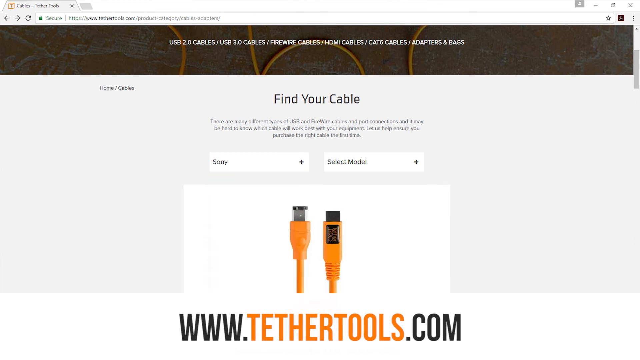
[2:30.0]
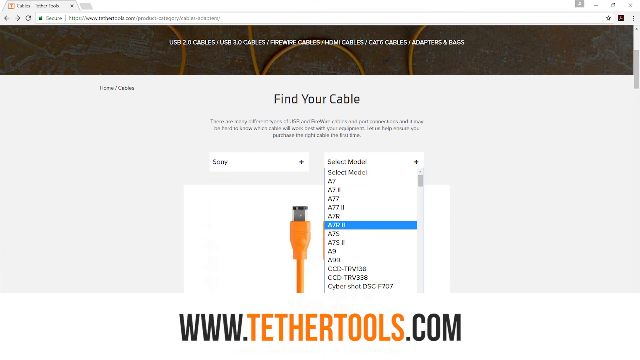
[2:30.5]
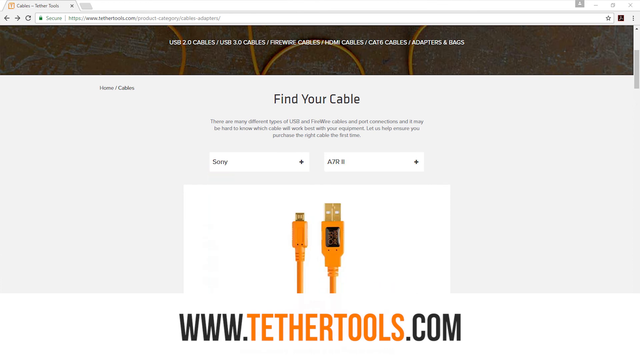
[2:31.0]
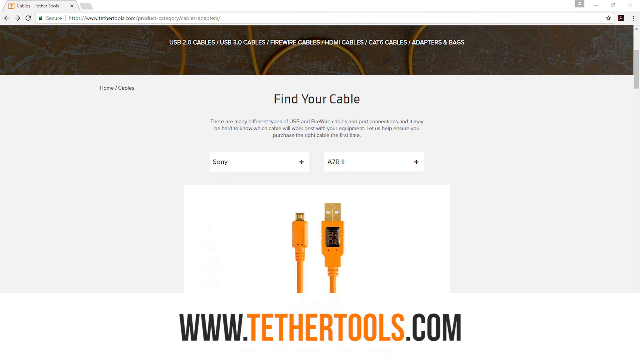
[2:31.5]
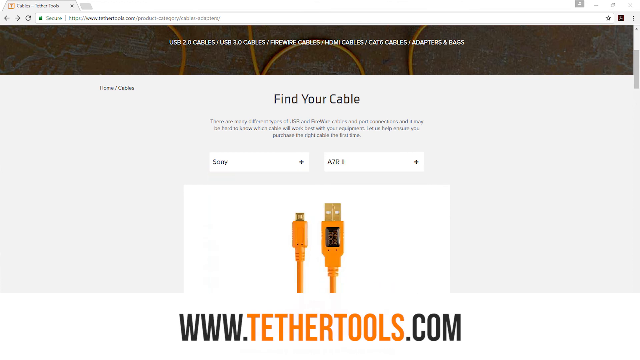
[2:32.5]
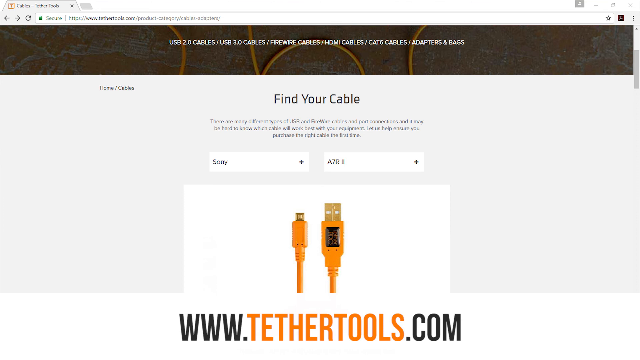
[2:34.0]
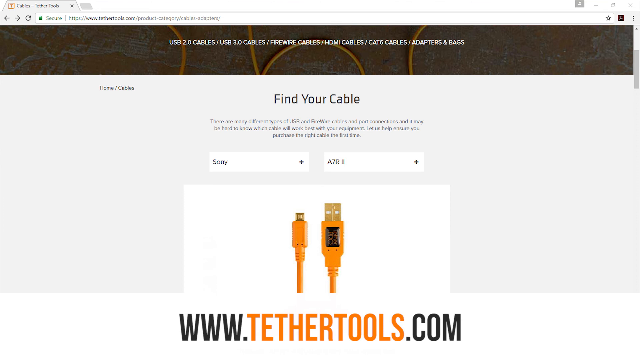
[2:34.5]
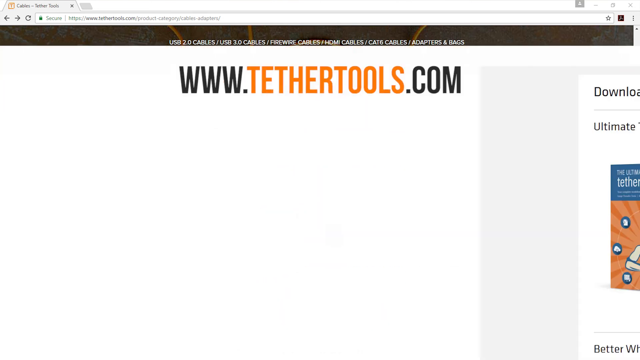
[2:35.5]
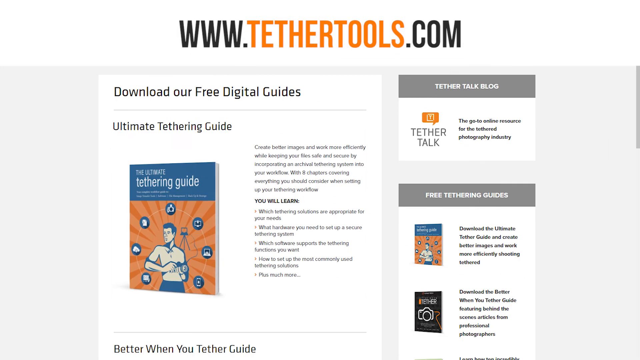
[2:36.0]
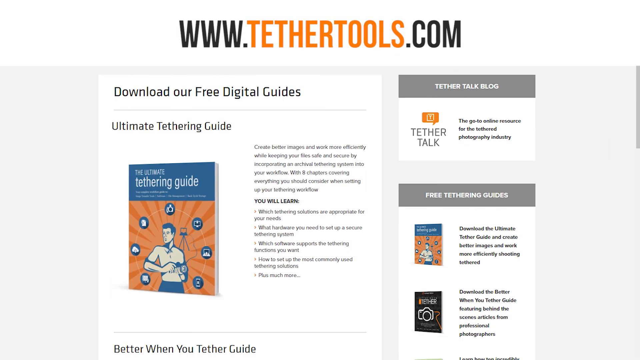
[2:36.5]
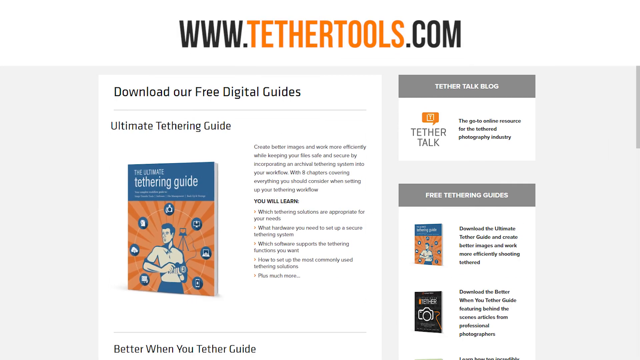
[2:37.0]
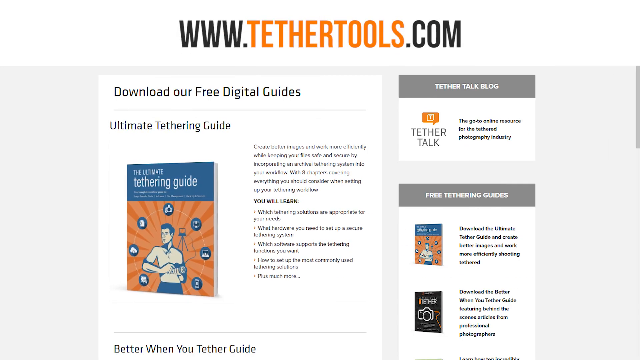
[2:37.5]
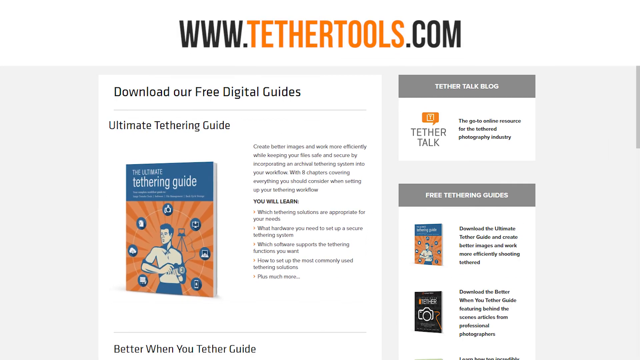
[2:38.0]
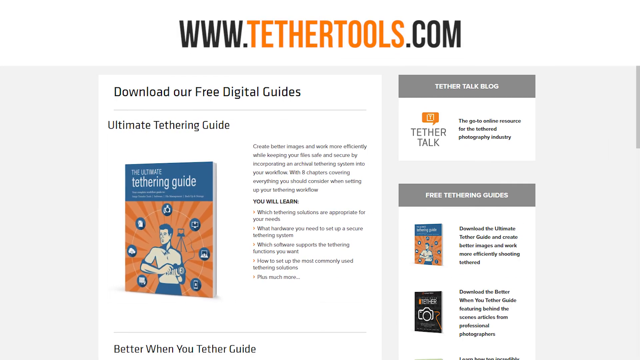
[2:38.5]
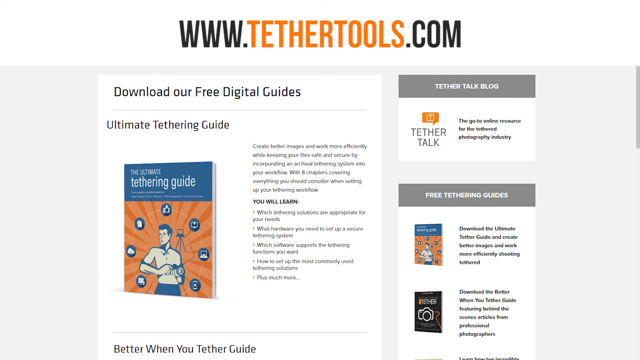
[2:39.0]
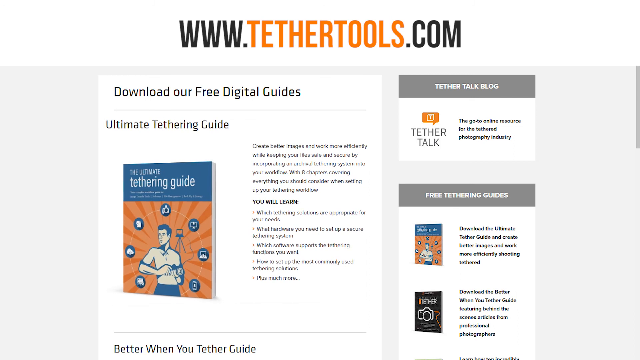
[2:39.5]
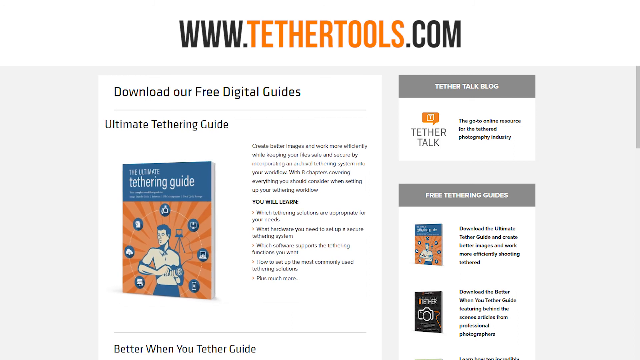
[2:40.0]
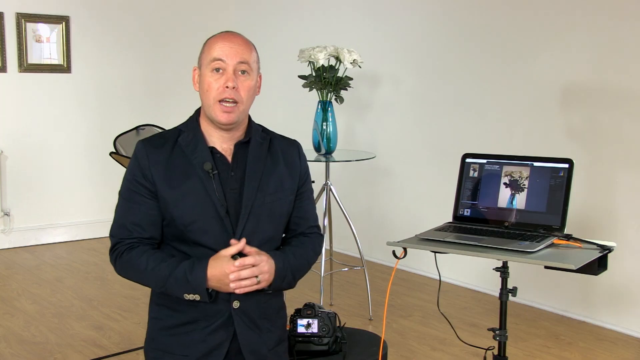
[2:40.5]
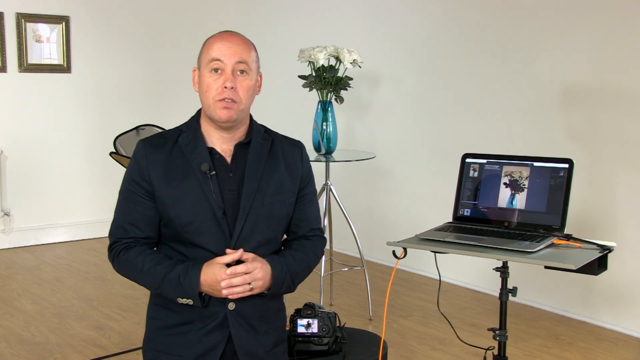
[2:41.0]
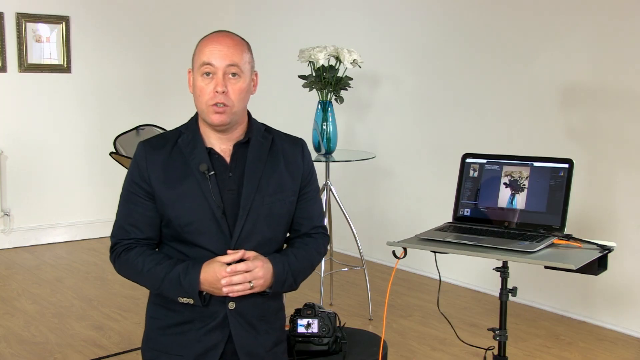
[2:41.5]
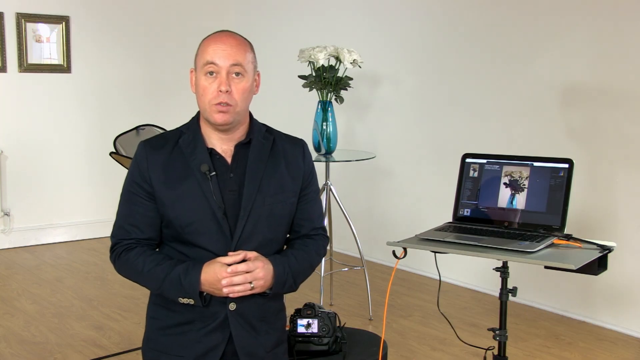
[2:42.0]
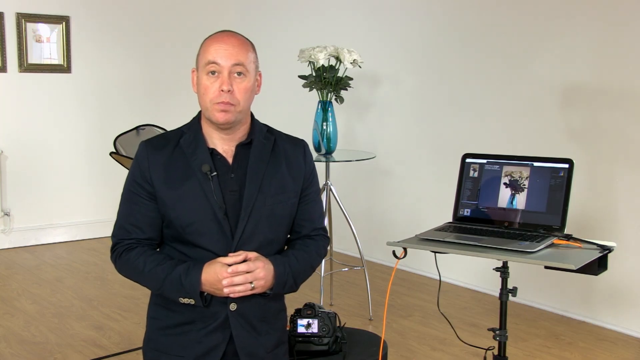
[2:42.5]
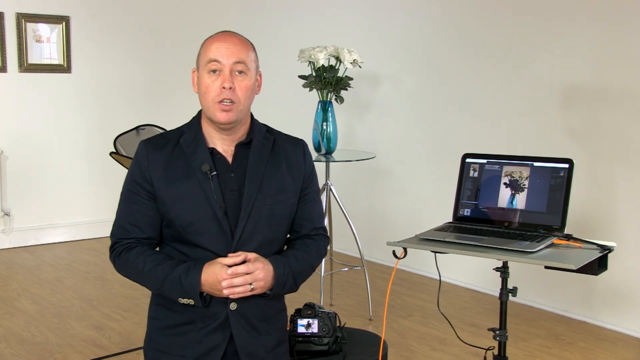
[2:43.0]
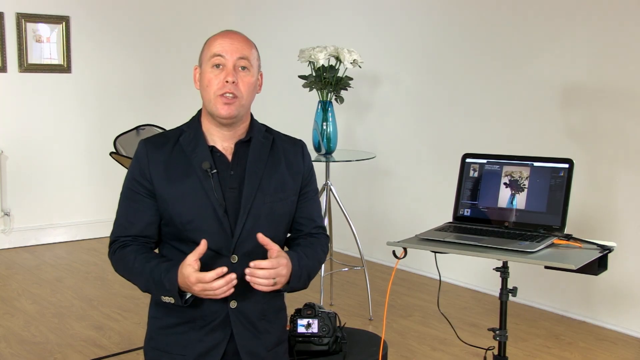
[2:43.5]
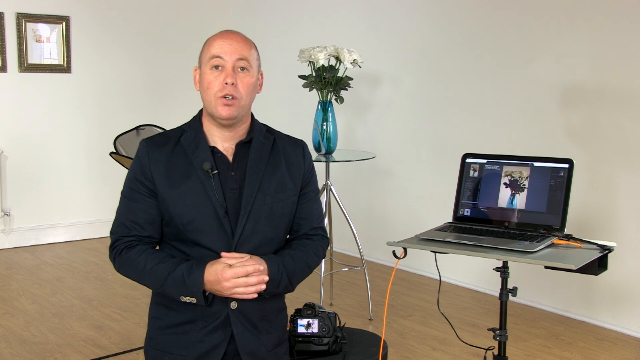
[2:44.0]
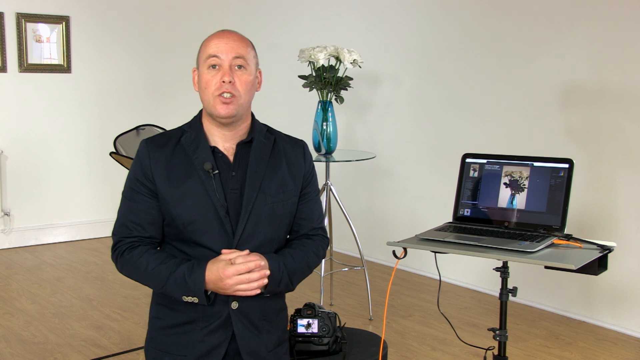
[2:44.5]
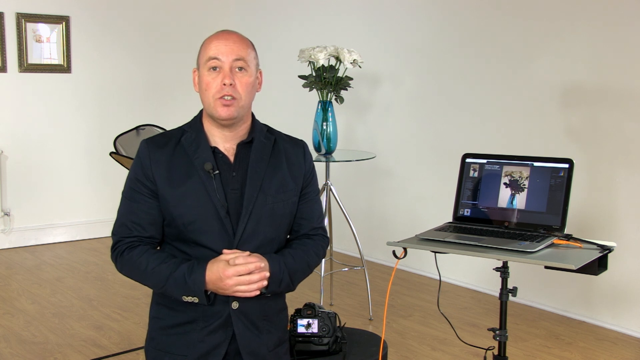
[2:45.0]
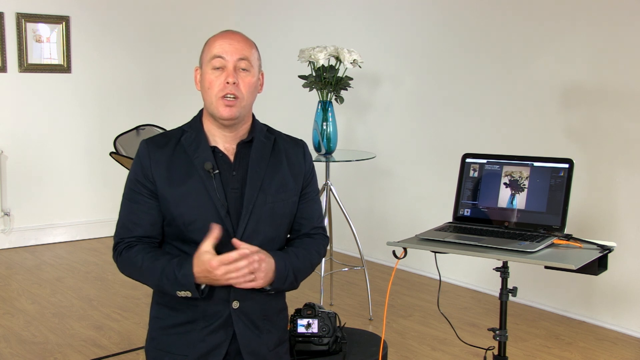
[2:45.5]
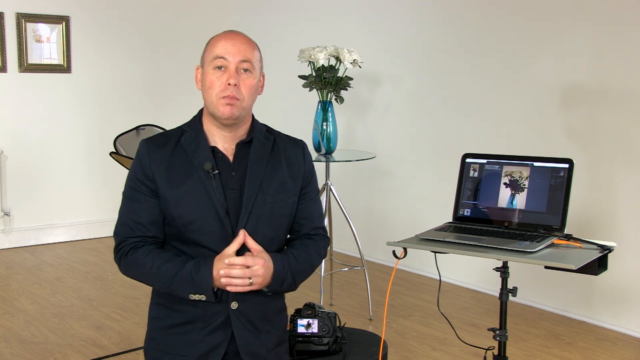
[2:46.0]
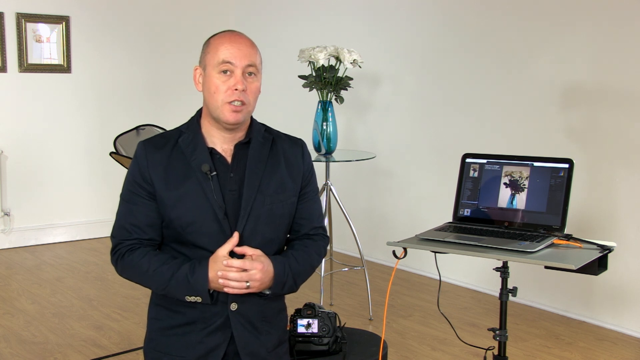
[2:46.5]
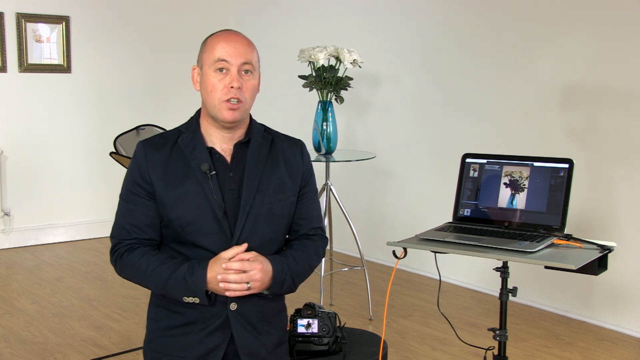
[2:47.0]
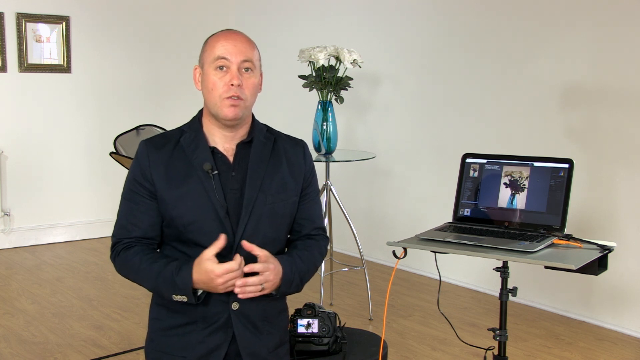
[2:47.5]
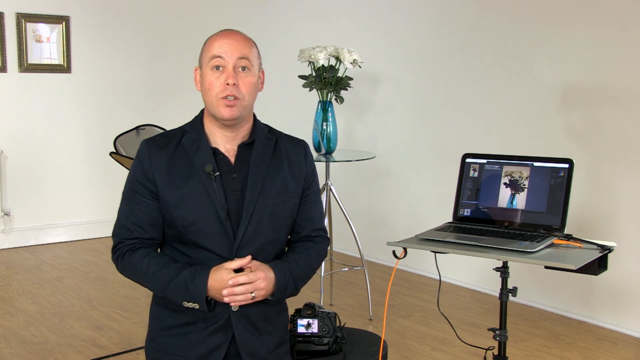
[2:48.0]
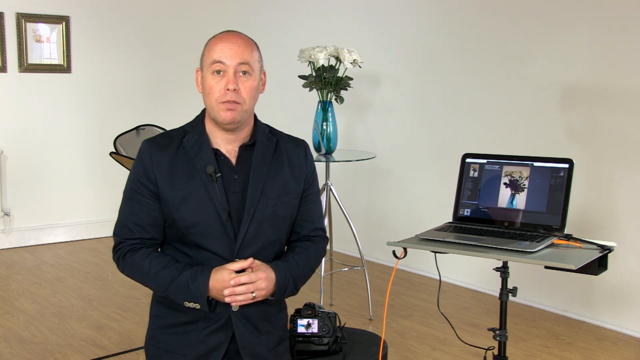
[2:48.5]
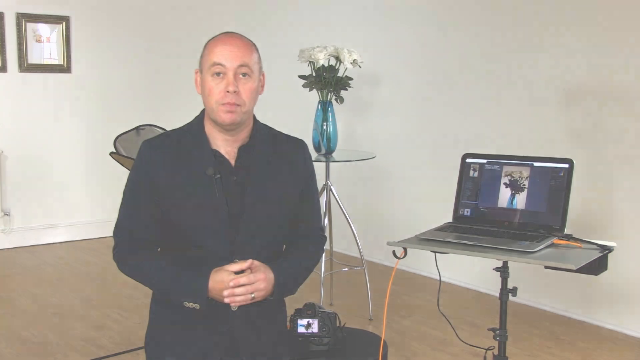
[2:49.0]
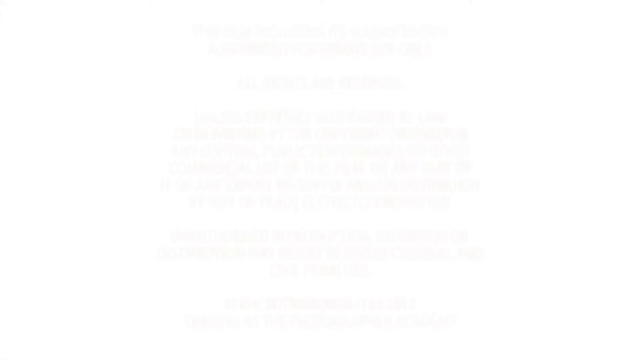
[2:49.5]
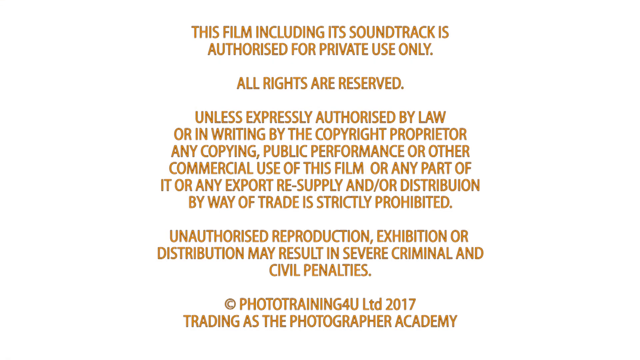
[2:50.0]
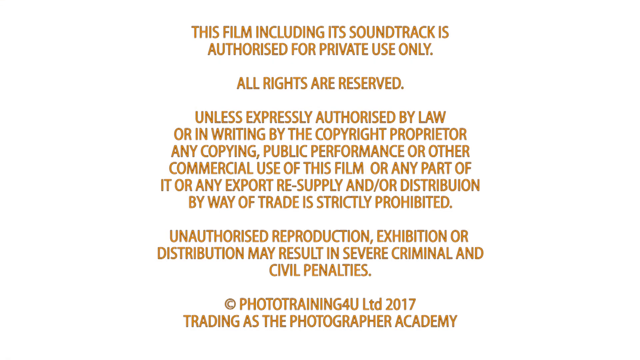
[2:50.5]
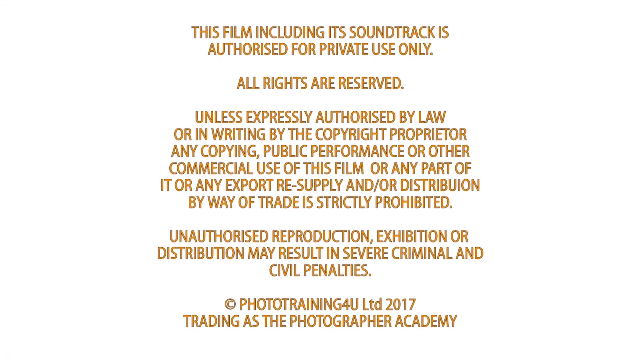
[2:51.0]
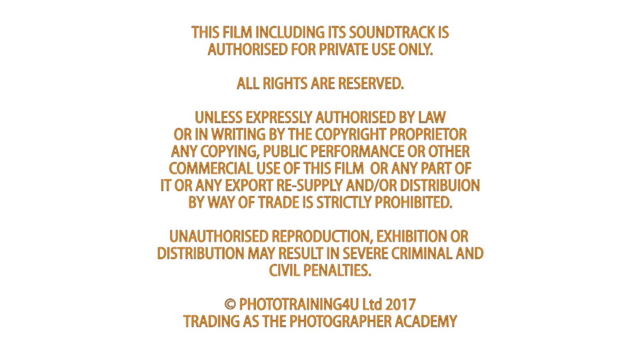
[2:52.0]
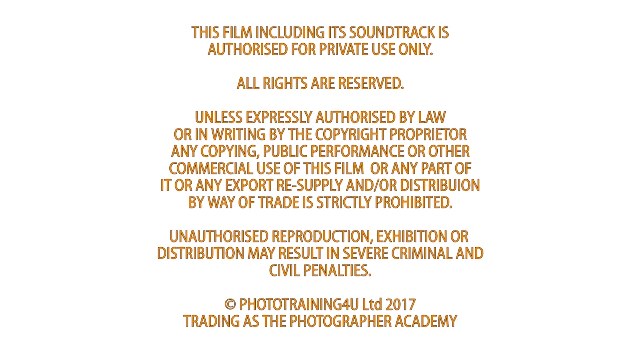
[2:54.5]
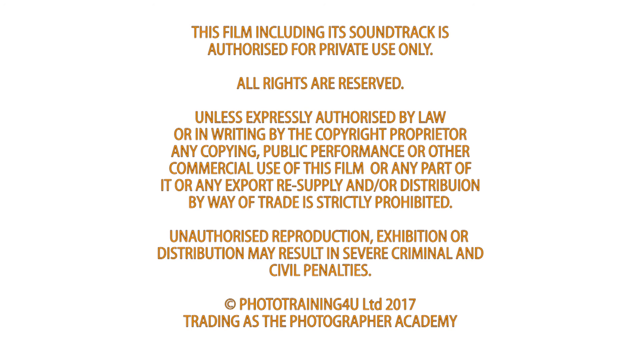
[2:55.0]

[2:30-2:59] An orange cable is shown on the screen, with a USB port and another port. The options at the top say "find your cable", with dropdowns for the brand; the selected brand is Sony and the type is "A7RS". The "www.tethertools.com" text moves from the bottom of the screen to the top, and beneath it the text reads "download our free digital guides, ultimate tethering guide", with a blue and orange picture of a book underneath and some text to its right. On the right-hand side it says "tether talk blogs and more information". The screen goes back to the man, who speaks to the camera while moving his hands; he wears a wedding ring on his left hand. At the end of the video, text appears in orange on a white background, starting "this film including its soundtrack is authorized for private use only. All rights are reserved", with more copyright information below it.